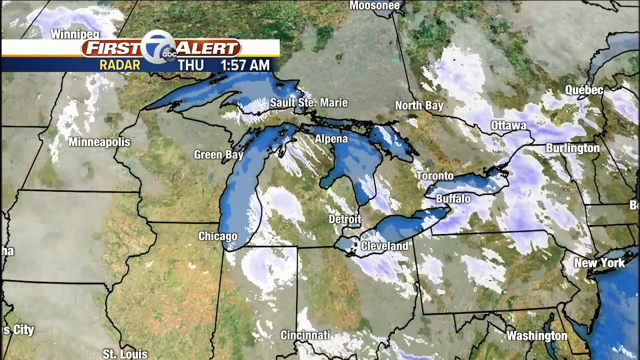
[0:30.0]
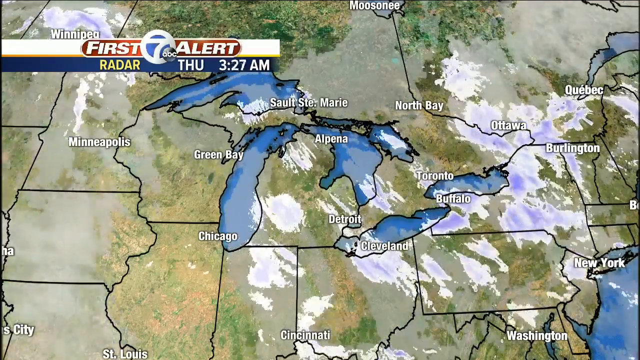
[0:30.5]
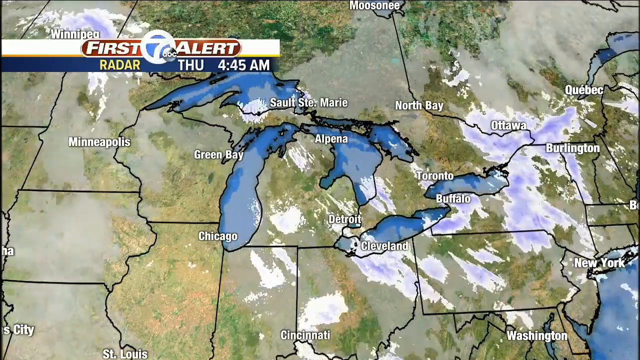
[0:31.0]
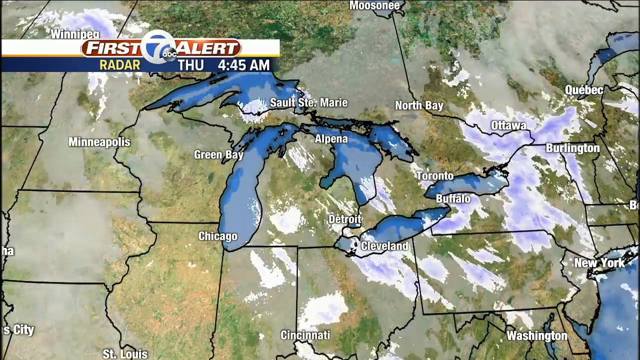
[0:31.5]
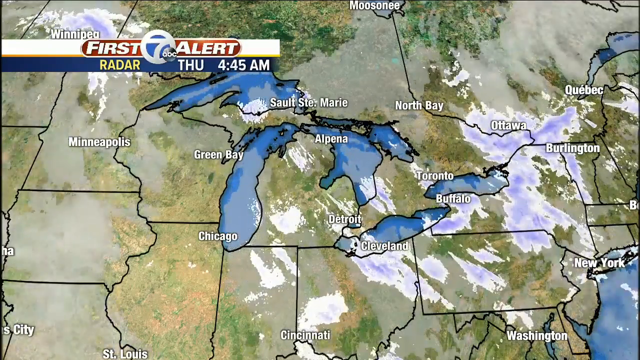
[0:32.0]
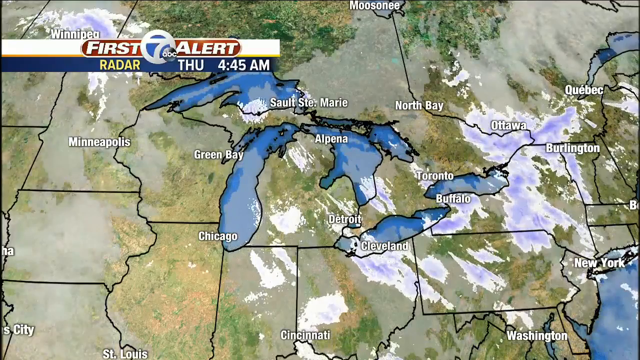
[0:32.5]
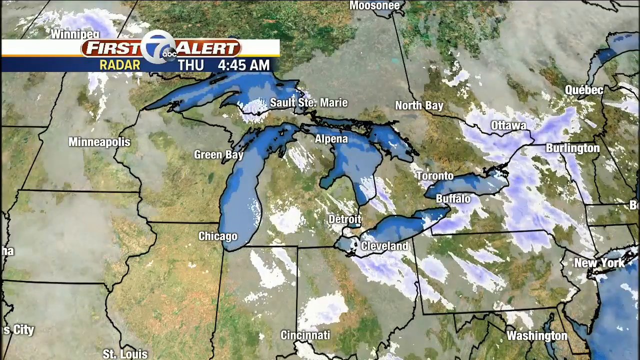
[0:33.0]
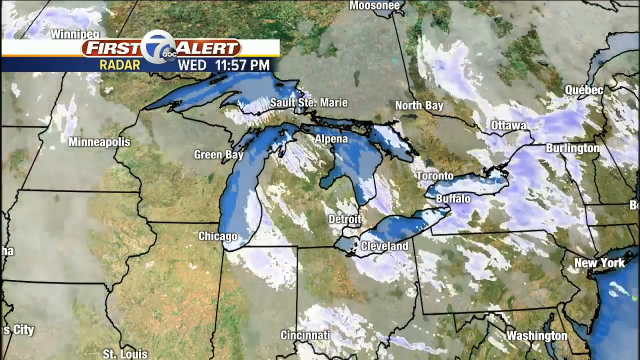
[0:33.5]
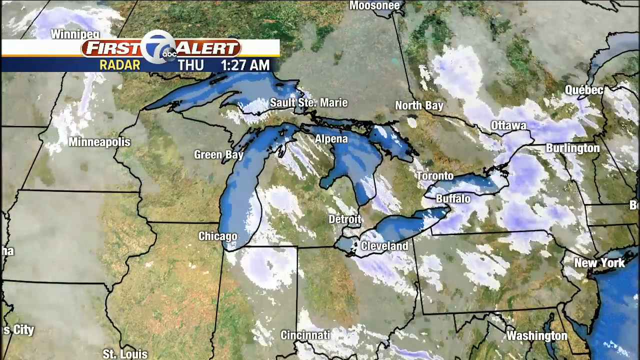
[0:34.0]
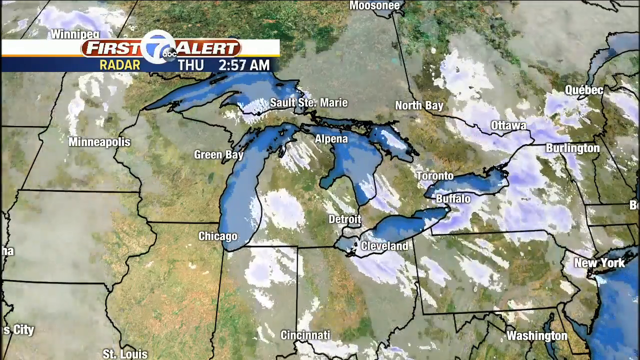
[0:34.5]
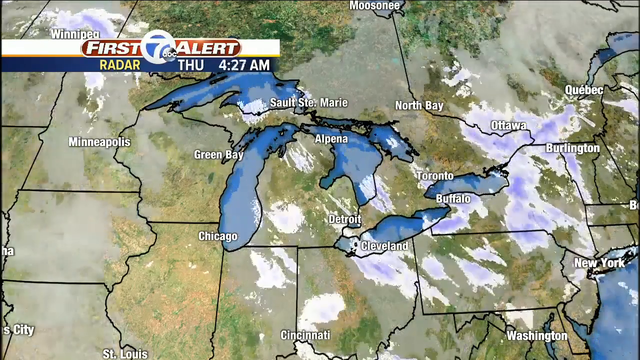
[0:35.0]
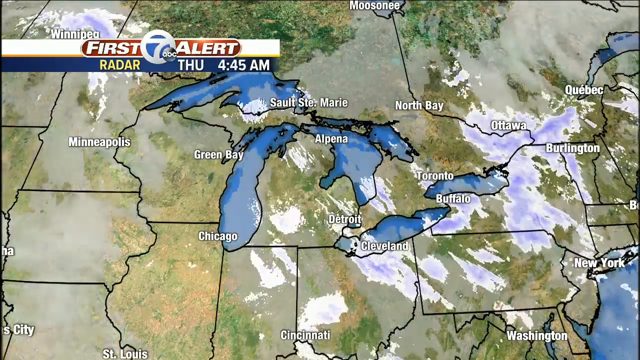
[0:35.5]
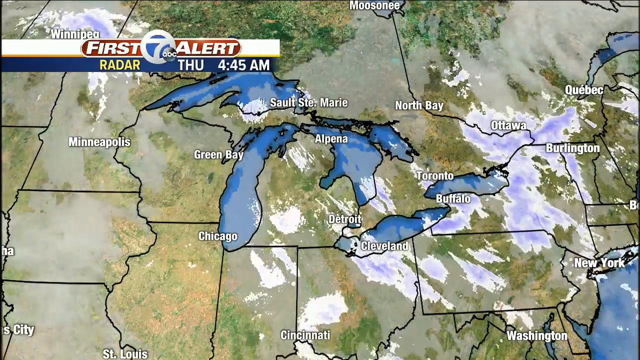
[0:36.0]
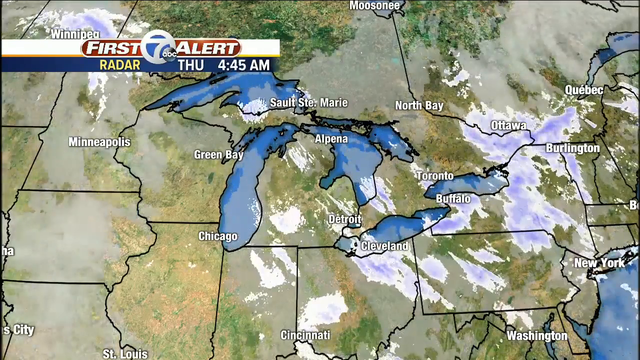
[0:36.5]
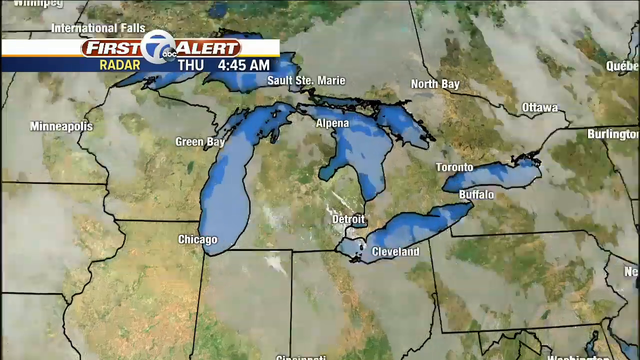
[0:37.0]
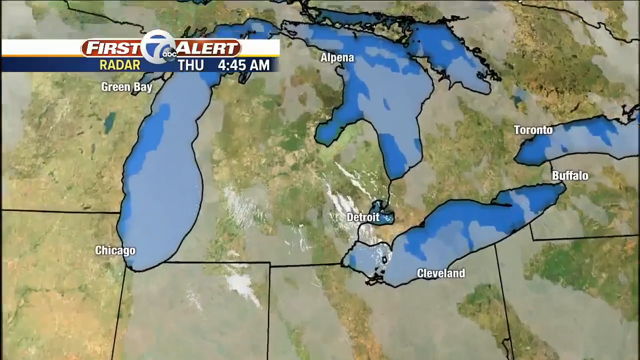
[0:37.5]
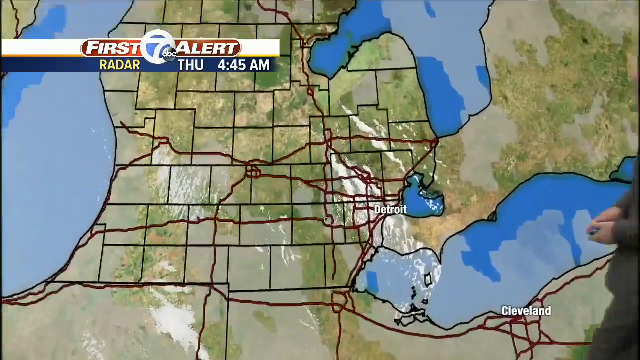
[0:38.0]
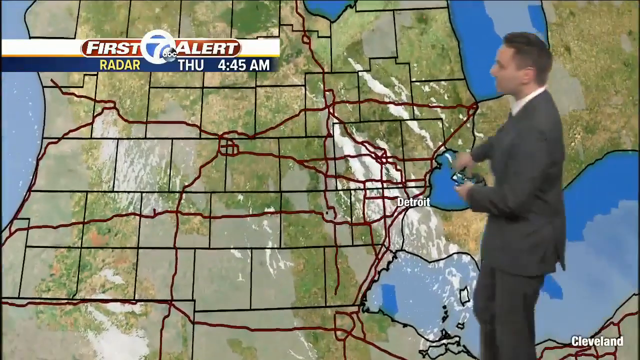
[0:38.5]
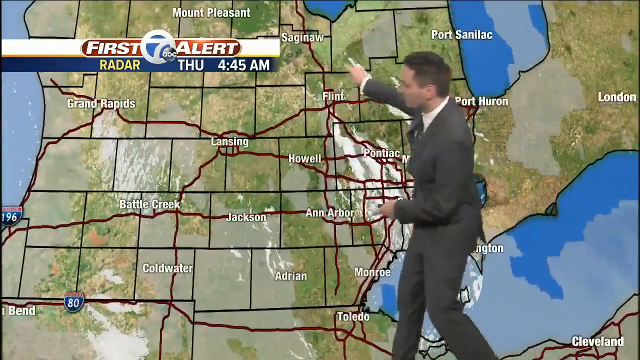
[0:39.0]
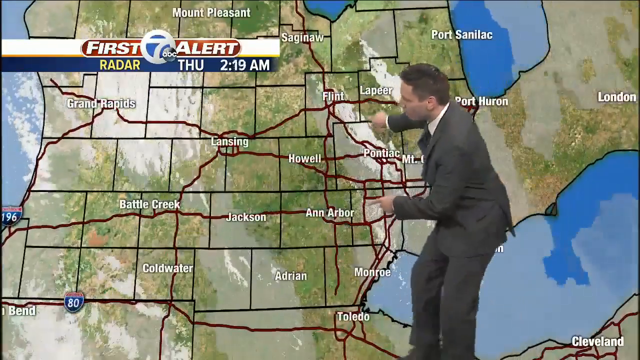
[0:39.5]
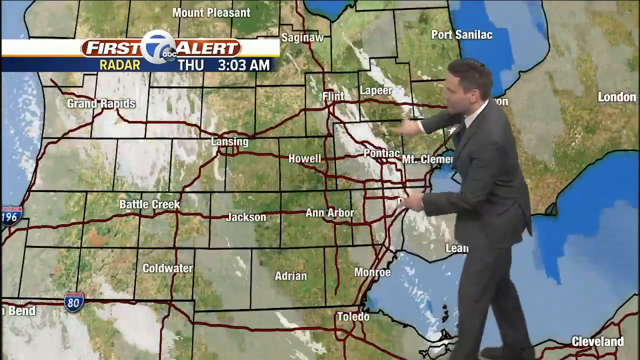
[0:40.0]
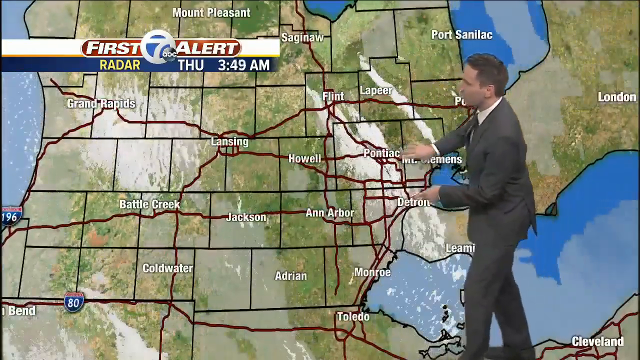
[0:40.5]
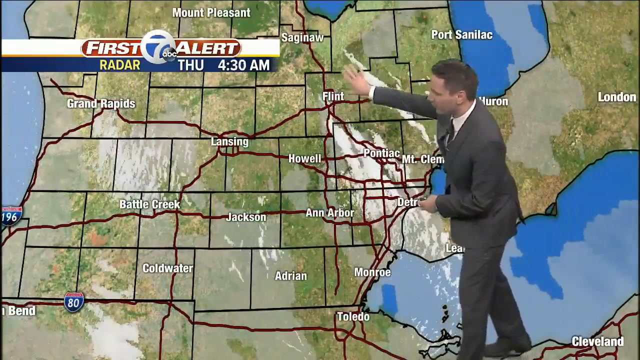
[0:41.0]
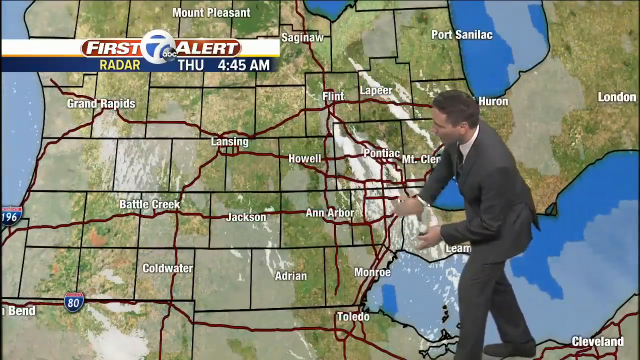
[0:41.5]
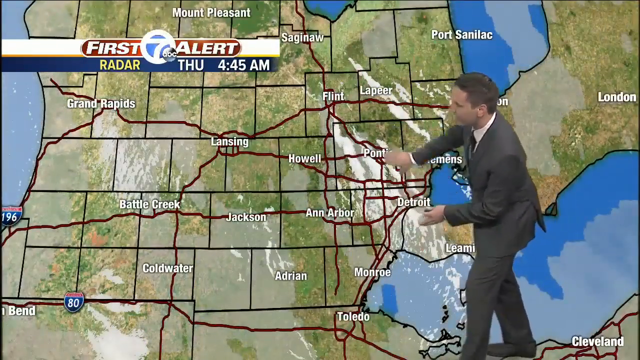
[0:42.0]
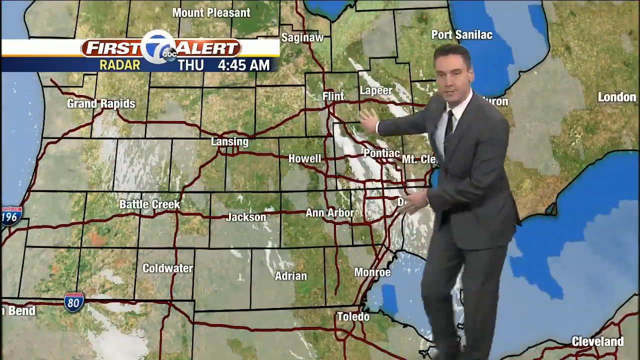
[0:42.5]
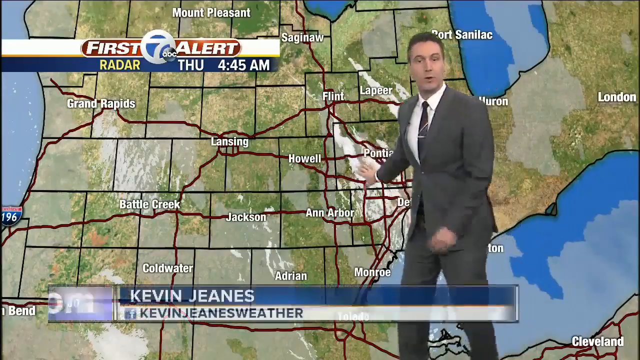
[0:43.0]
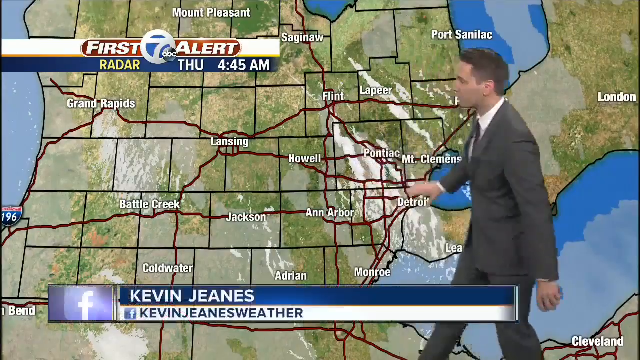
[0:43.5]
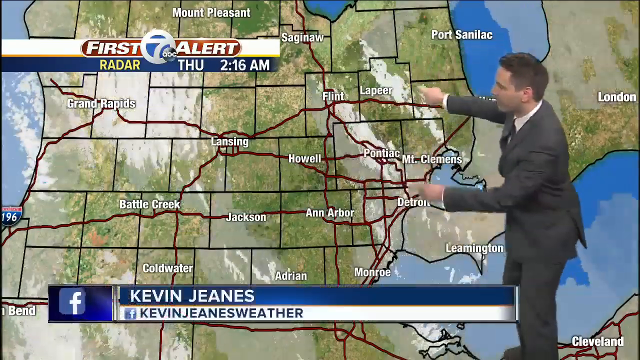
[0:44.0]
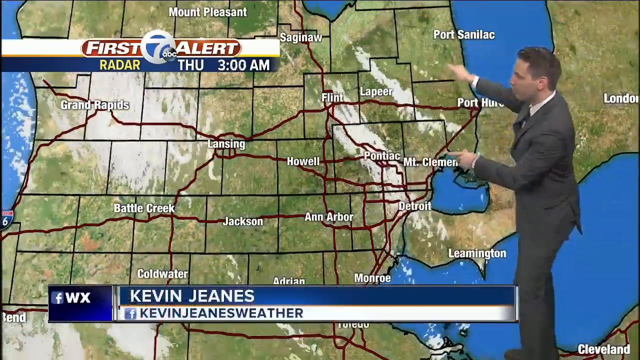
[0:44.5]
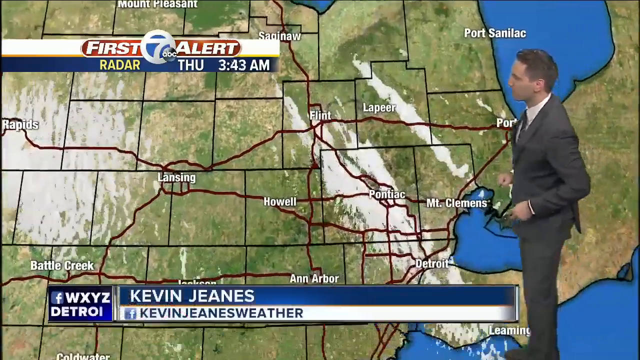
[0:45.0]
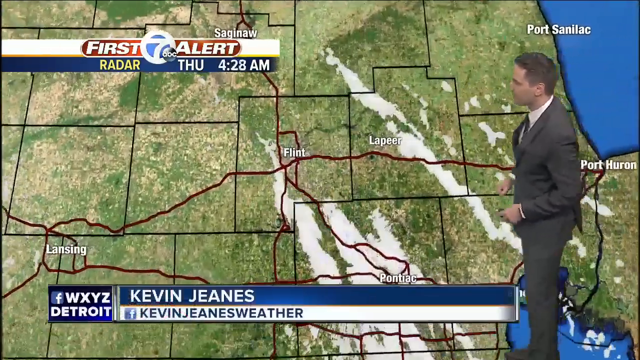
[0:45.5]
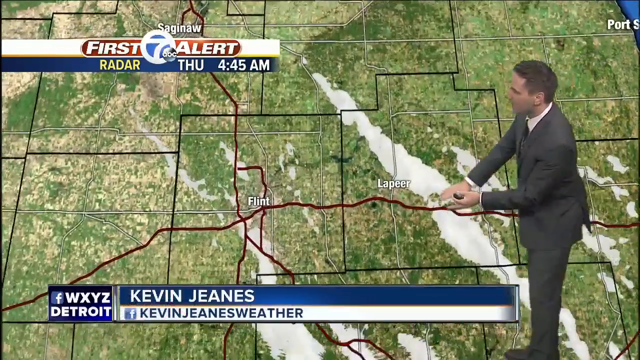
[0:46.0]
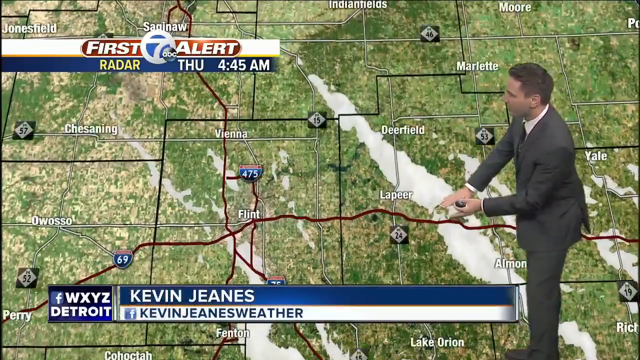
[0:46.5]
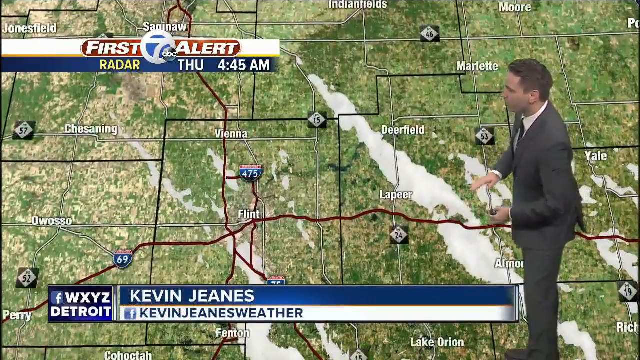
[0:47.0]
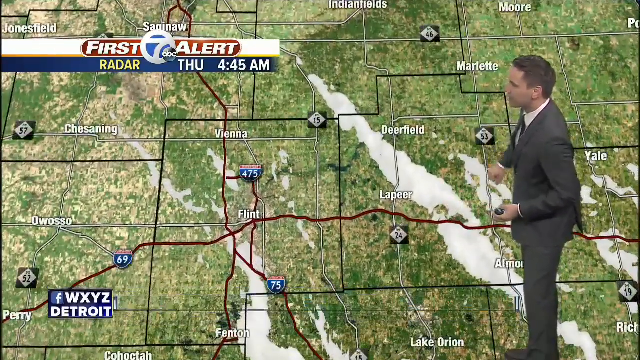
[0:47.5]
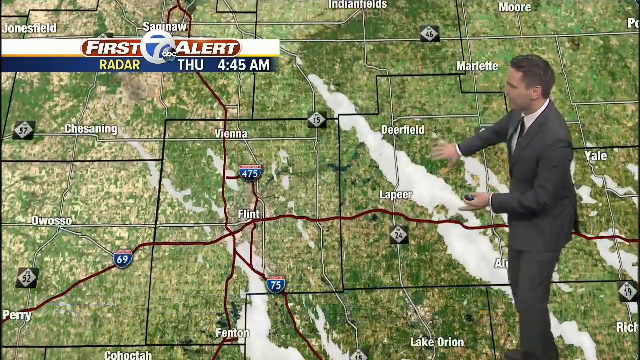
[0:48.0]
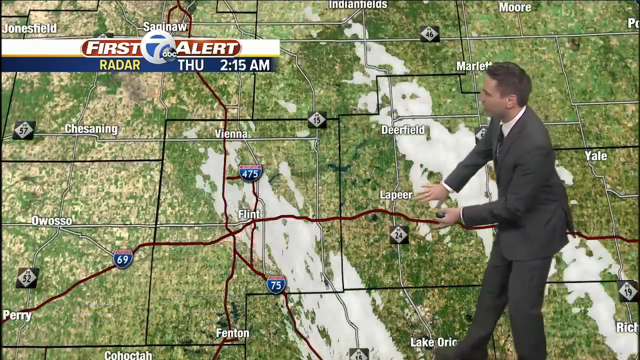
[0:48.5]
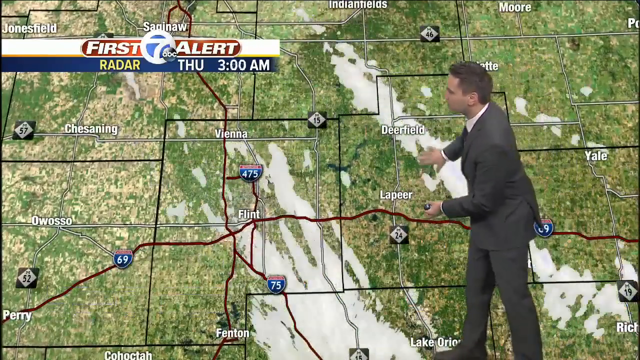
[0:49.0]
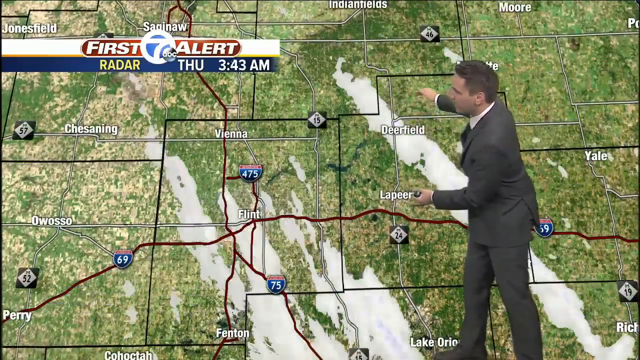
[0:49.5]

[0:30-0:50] The weather map shows the Great Lakes with what looks like some type of cloud movement. The man in the gray suit runs over to the weather map as the video zooms in on a particular area. He motions dramatically with his hands, as if something huge is happening, and moves his right hand up and down. The map looks like clouds passing over it. He walks around, moving his hands up and down with them separated, one up and one down, as he explains something on the map. A name appears on the screen: "Kevin Jeanes". He is the weatherman.